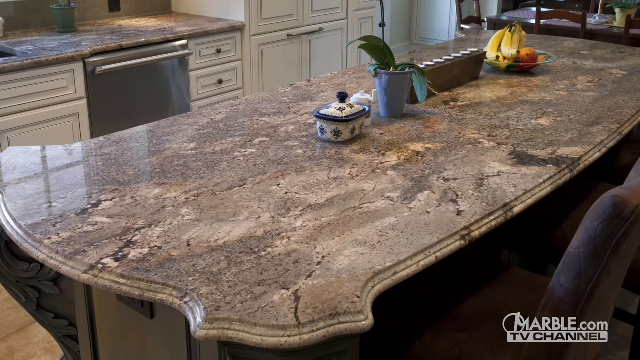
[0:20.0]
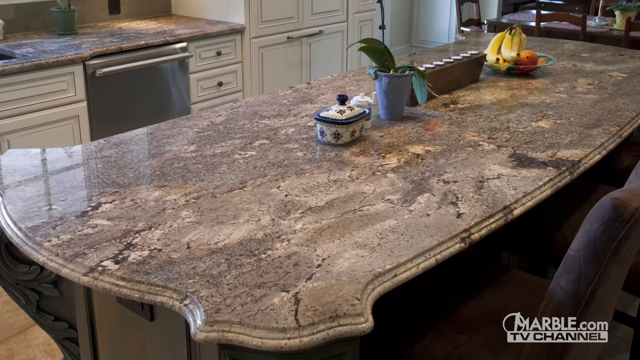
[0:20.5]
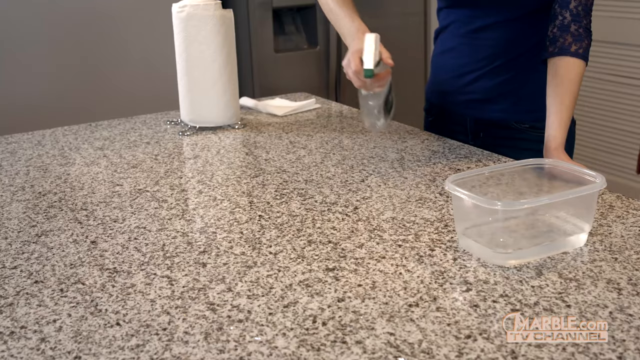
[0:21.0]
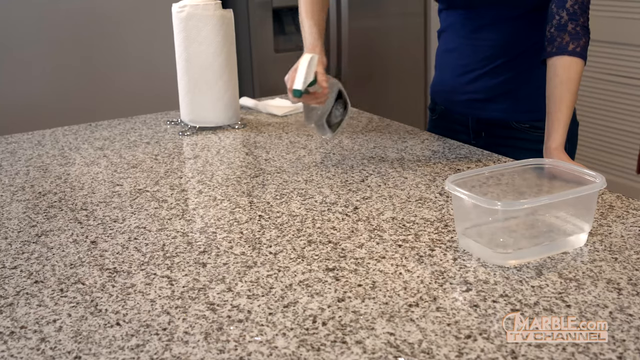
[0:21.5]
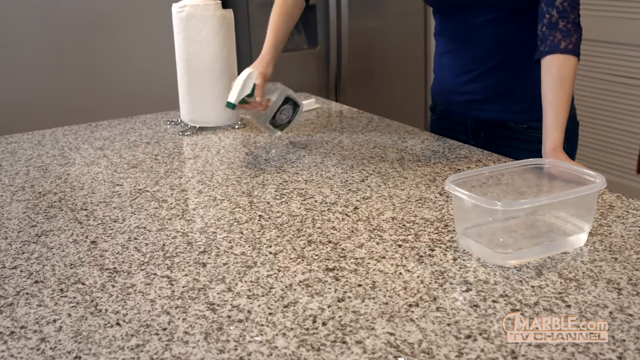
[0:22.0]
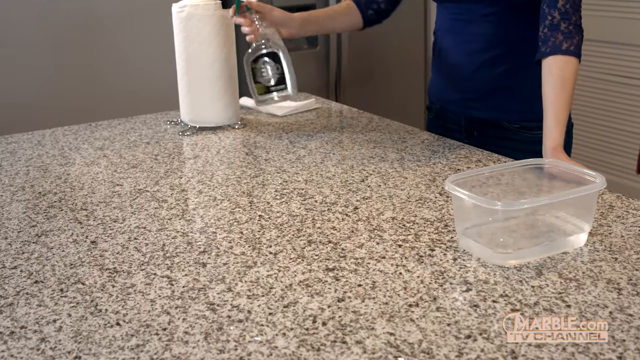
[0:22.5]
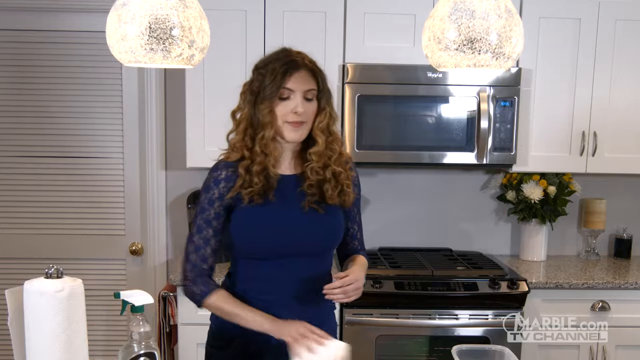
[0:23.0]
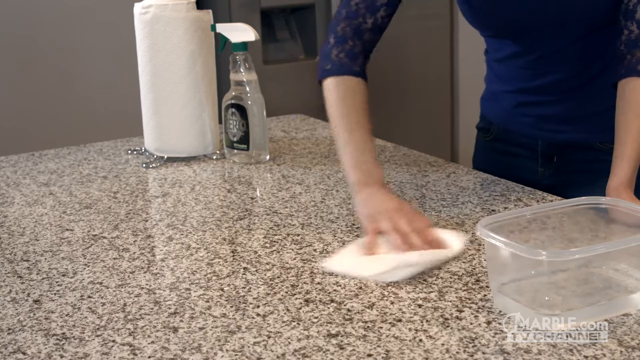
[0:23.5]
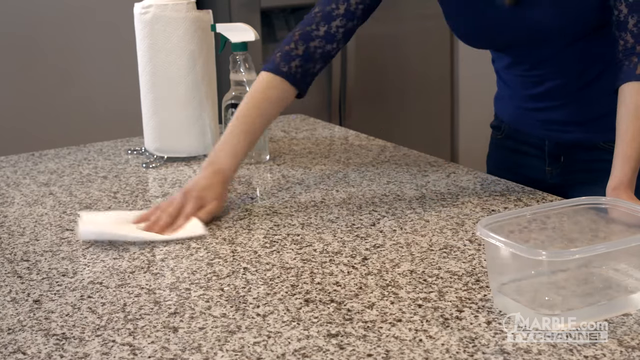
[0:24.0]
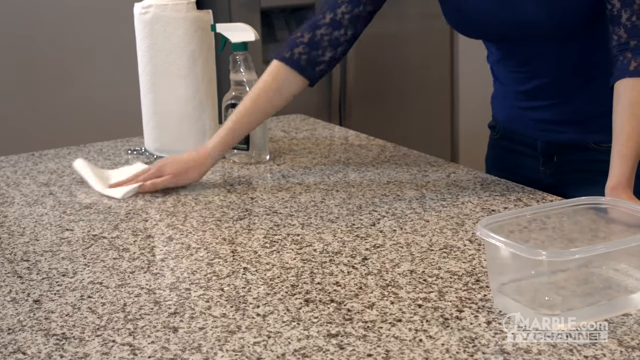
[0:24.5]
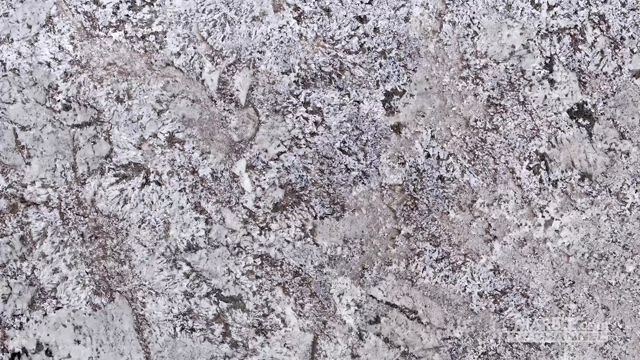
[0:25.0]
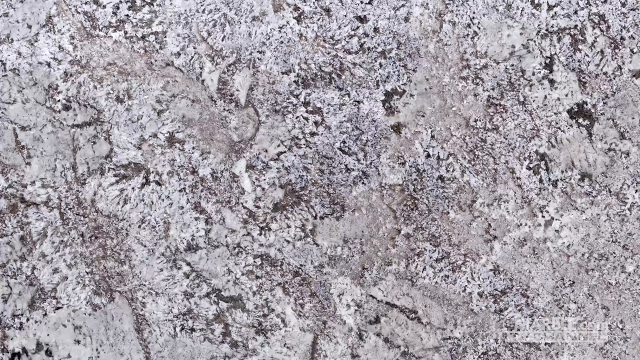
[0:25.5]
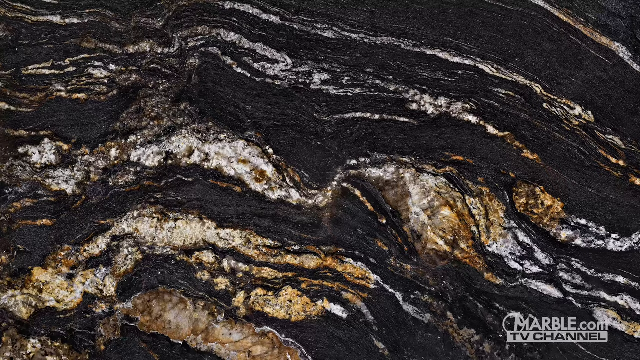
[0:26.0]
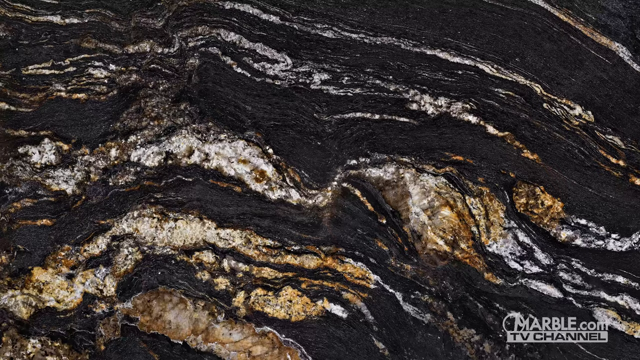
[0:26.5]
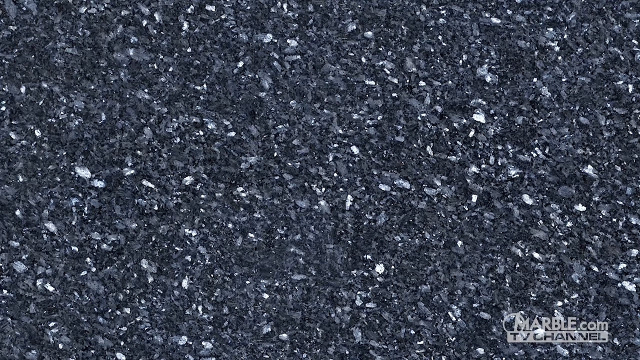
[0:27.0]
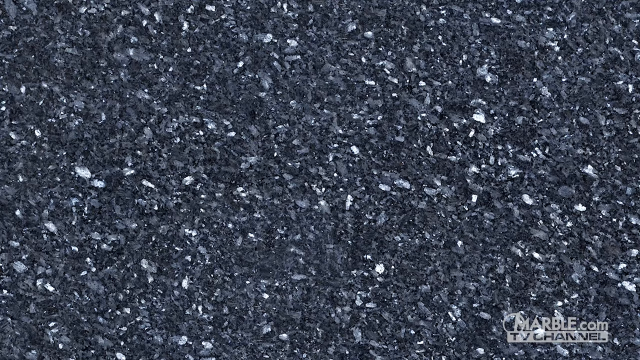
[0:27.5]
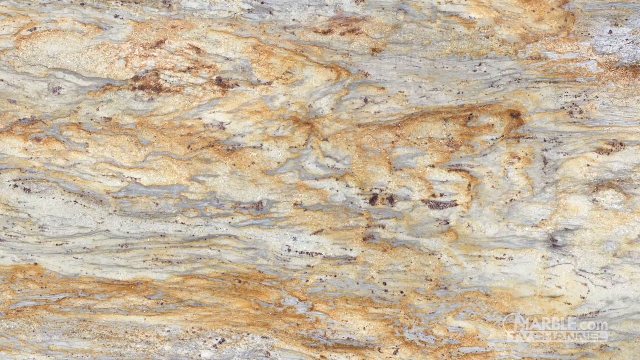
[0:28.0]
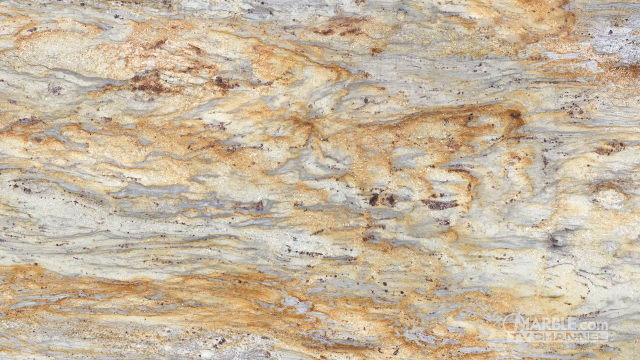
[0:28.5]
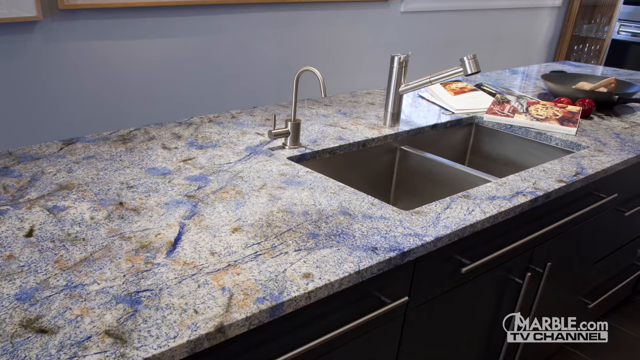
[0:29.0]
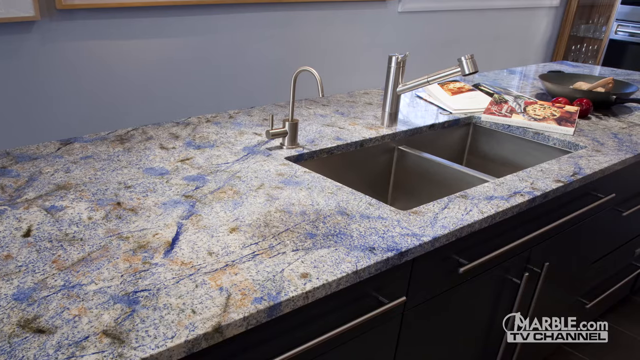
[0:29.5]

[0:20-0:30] A woman cleans a granite table with a spray in her hand, appearing very calm. She wears a blue long-sleeved outfit and has curly hair, and she is in what appears to be a kitchen, passing a cleaning cloth over the granite to show how it shines after cleaning. The view then zooms in on several different types of granite with various colors, thicknesses and textures, each piece very different from the next.